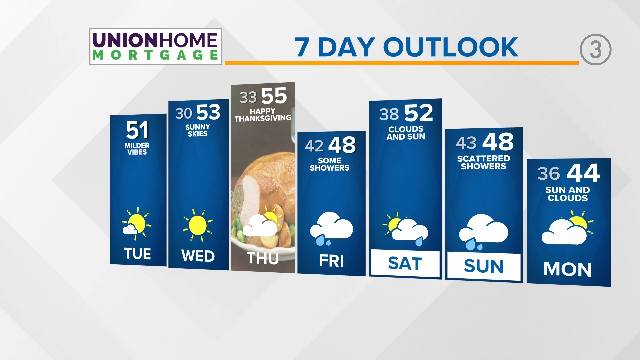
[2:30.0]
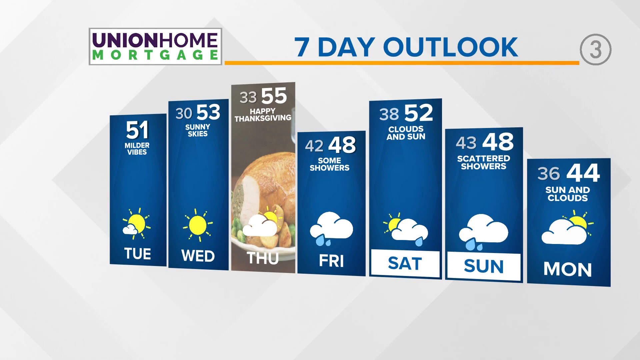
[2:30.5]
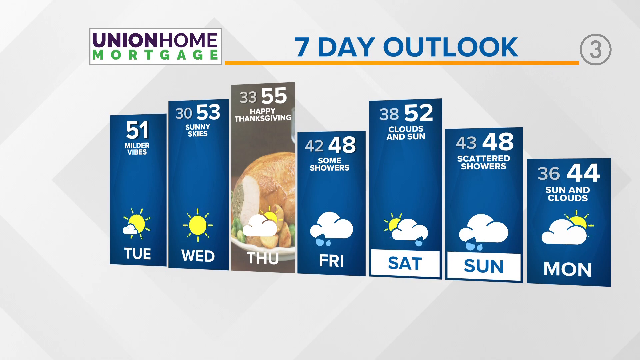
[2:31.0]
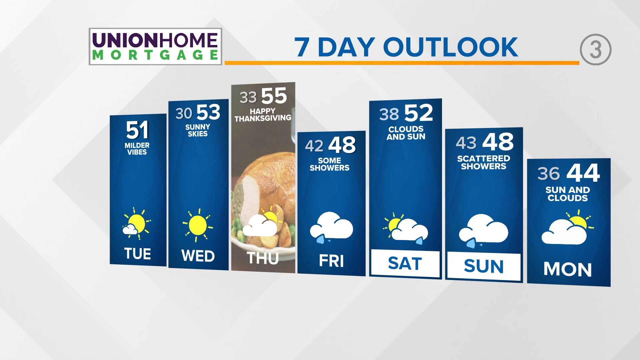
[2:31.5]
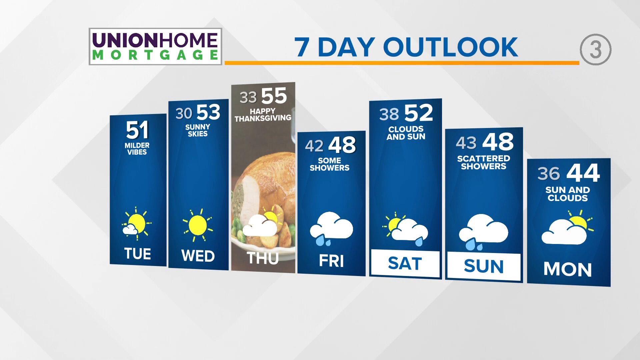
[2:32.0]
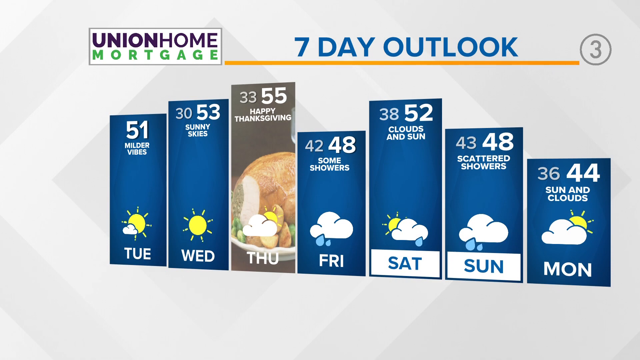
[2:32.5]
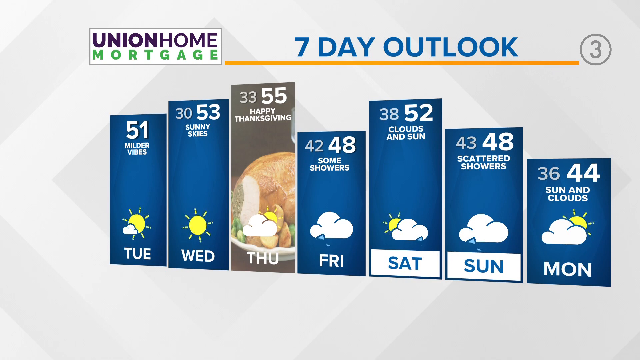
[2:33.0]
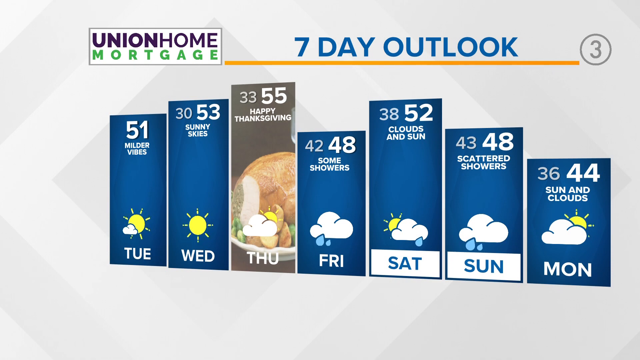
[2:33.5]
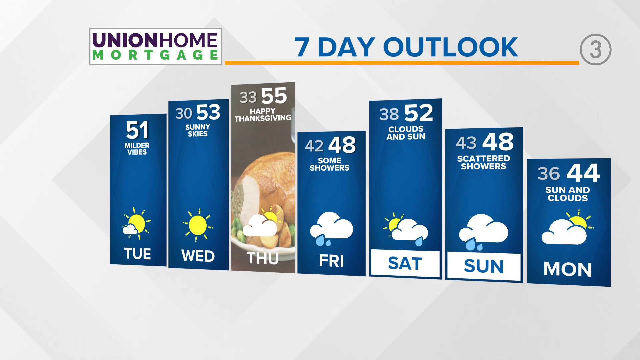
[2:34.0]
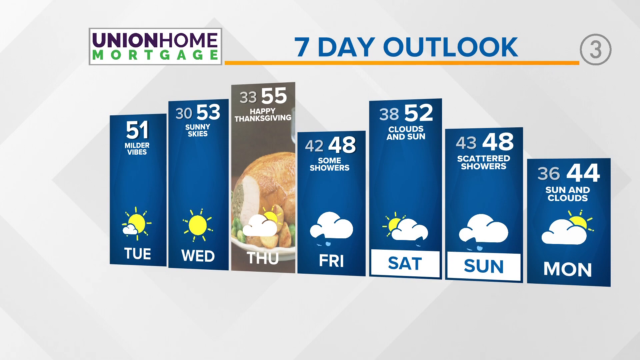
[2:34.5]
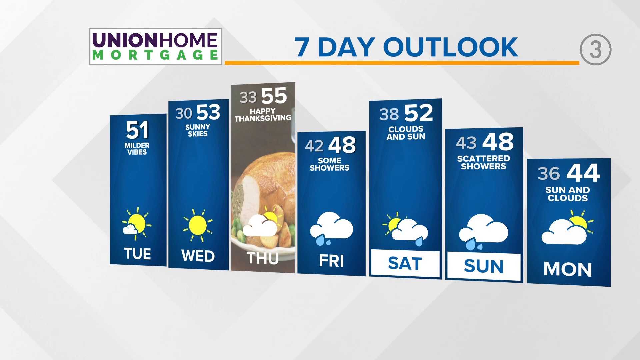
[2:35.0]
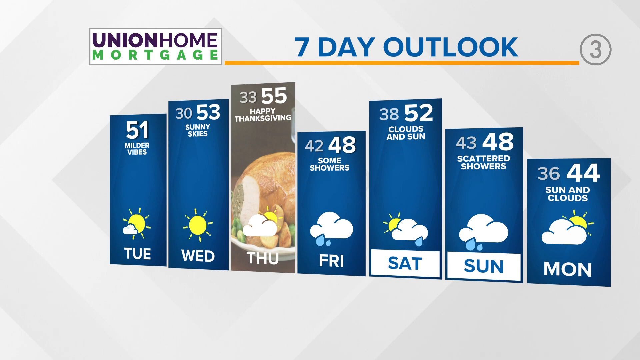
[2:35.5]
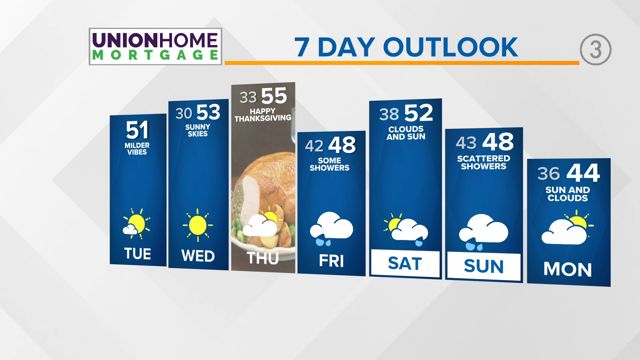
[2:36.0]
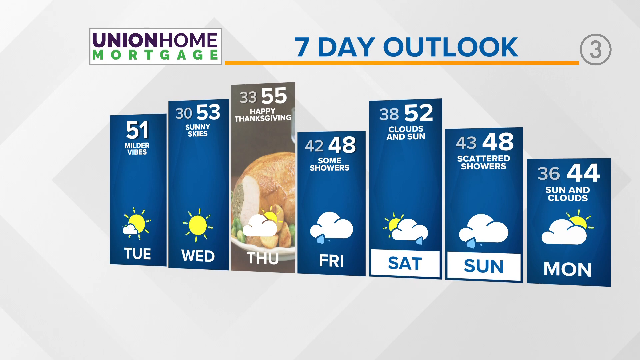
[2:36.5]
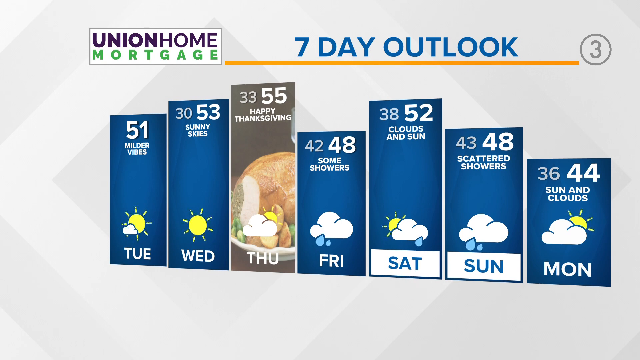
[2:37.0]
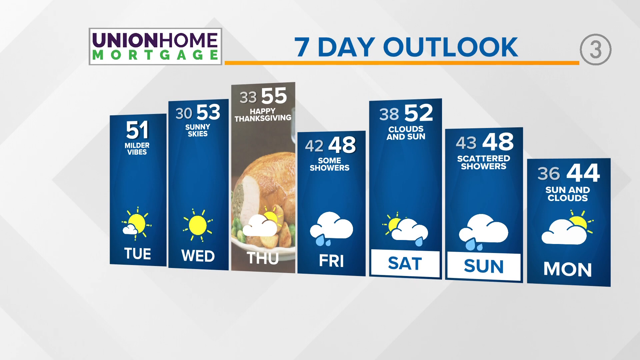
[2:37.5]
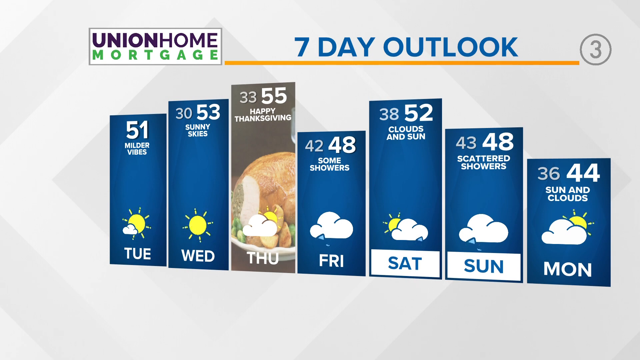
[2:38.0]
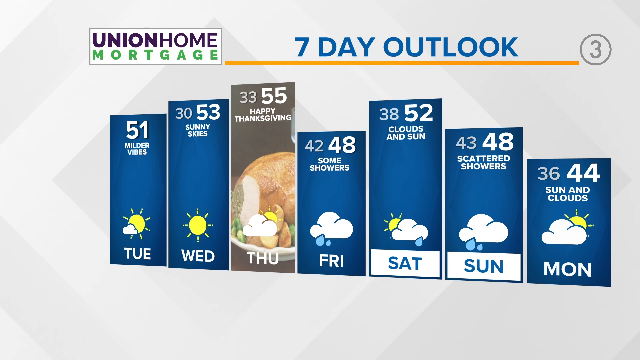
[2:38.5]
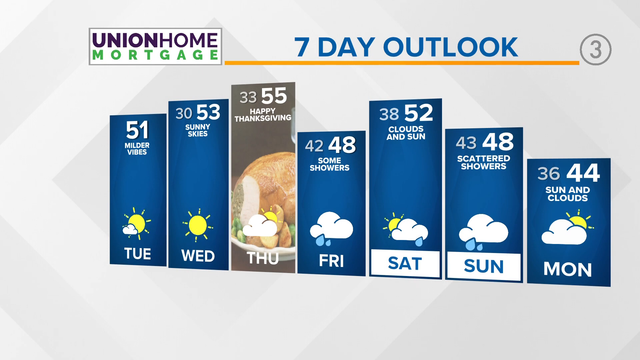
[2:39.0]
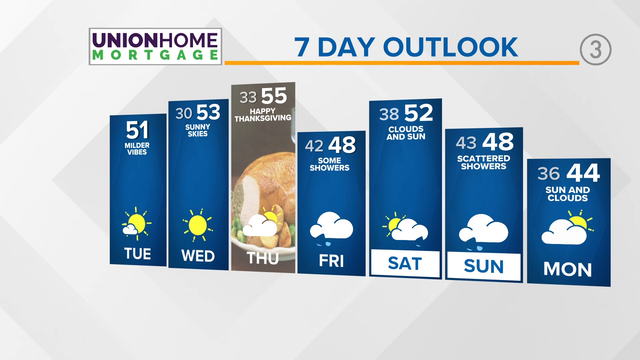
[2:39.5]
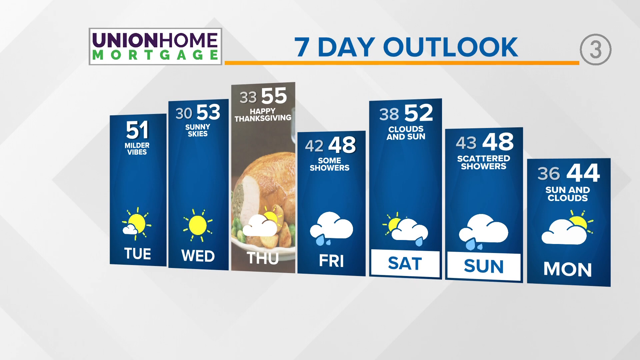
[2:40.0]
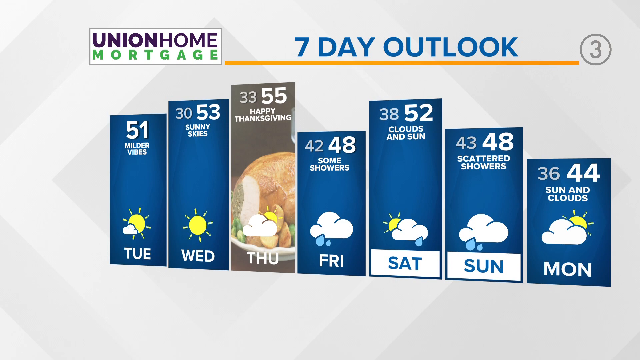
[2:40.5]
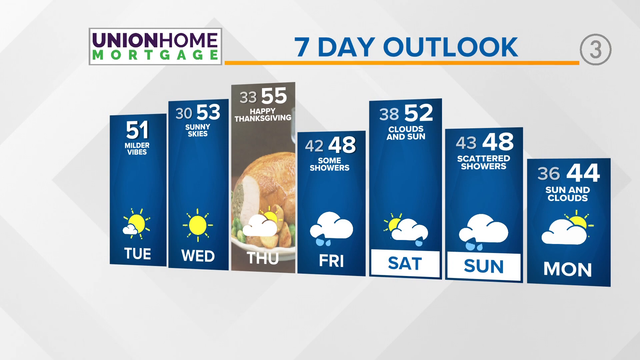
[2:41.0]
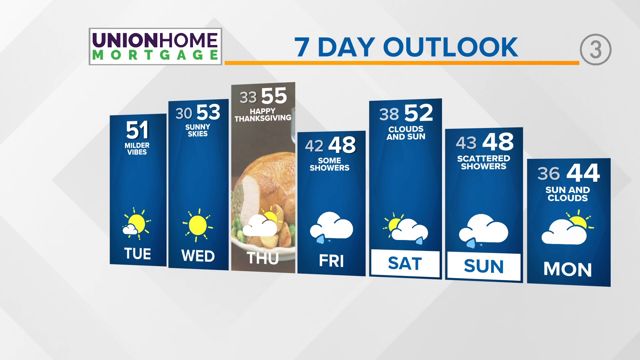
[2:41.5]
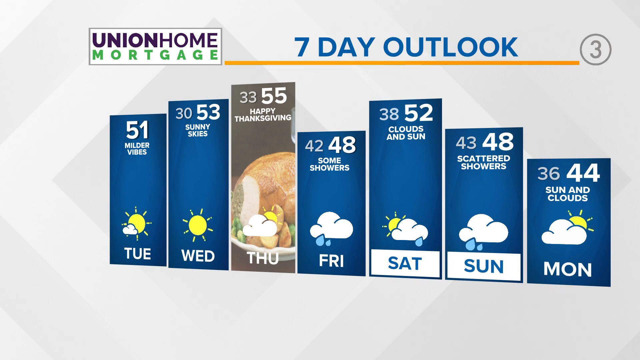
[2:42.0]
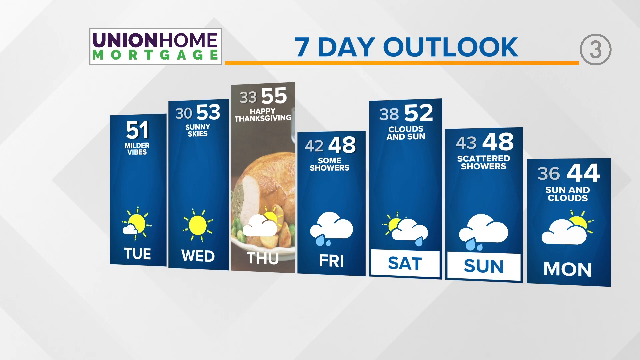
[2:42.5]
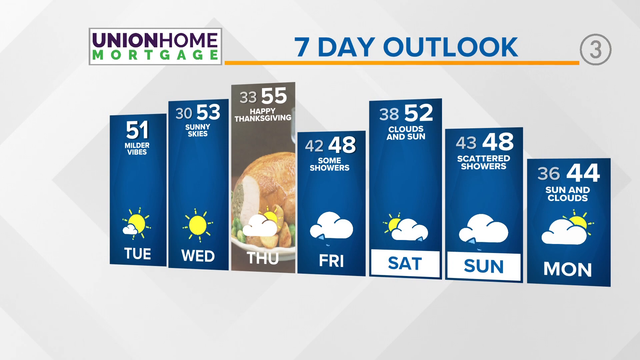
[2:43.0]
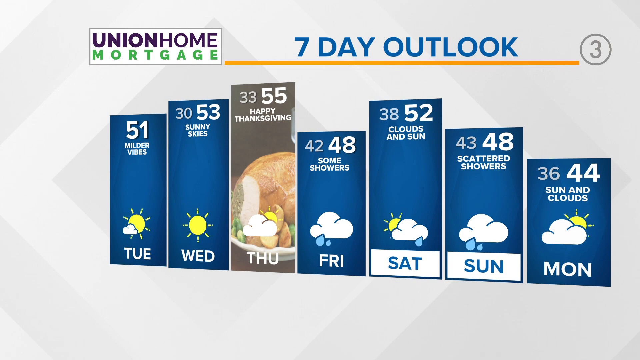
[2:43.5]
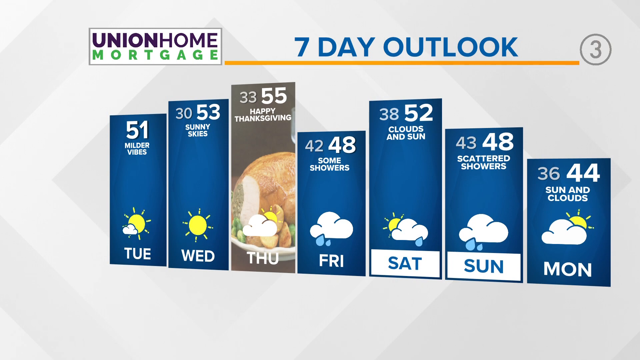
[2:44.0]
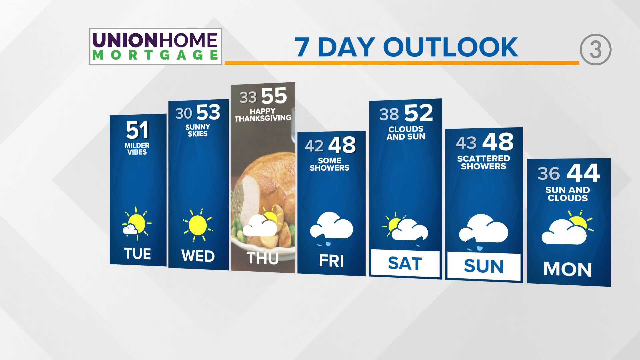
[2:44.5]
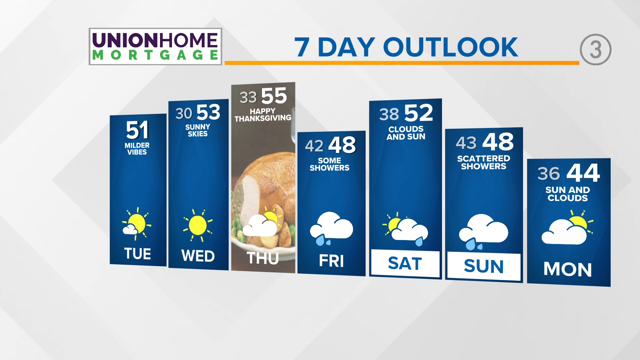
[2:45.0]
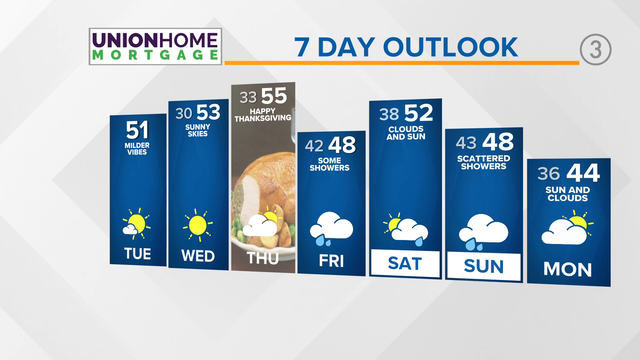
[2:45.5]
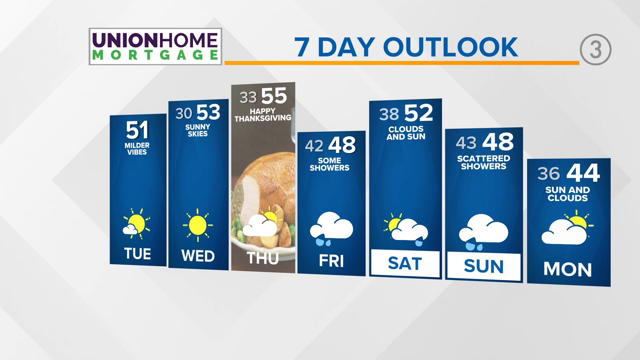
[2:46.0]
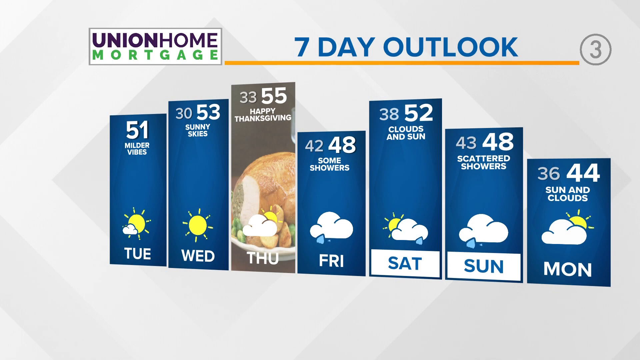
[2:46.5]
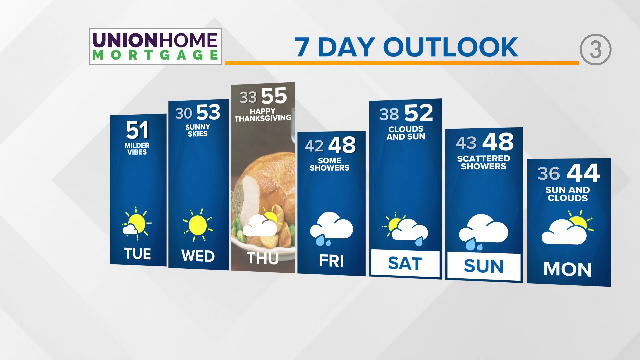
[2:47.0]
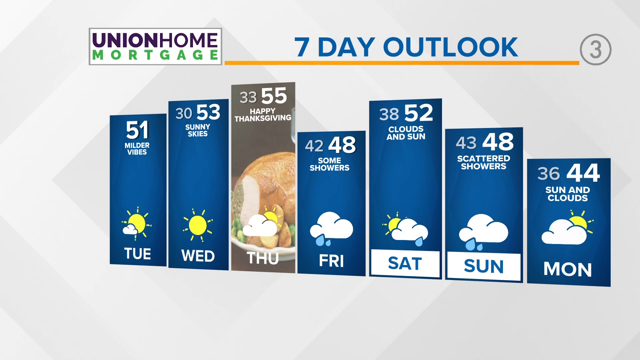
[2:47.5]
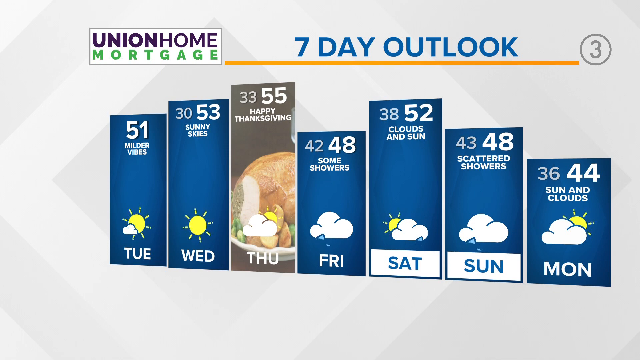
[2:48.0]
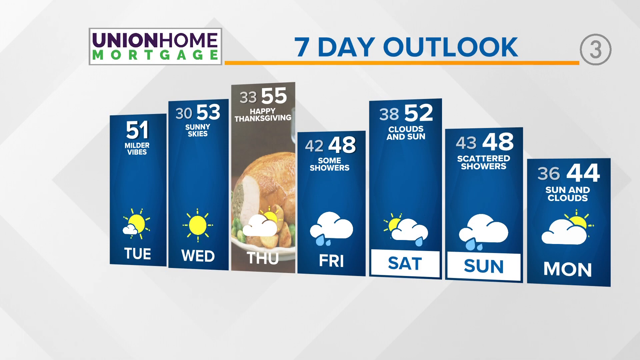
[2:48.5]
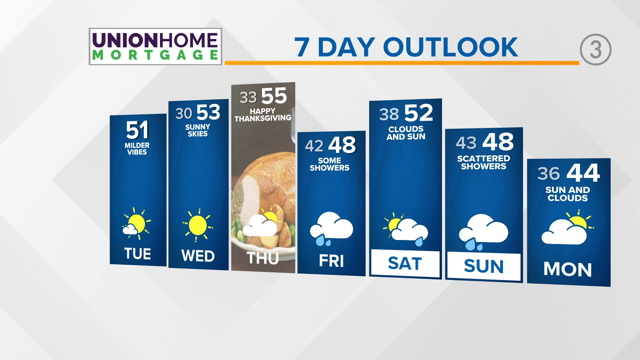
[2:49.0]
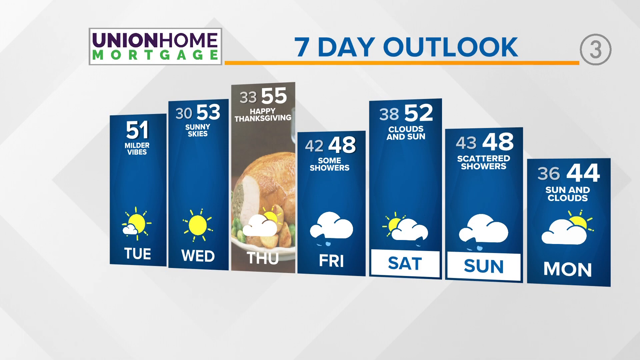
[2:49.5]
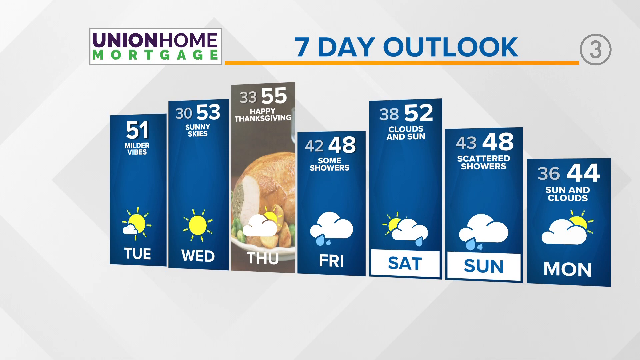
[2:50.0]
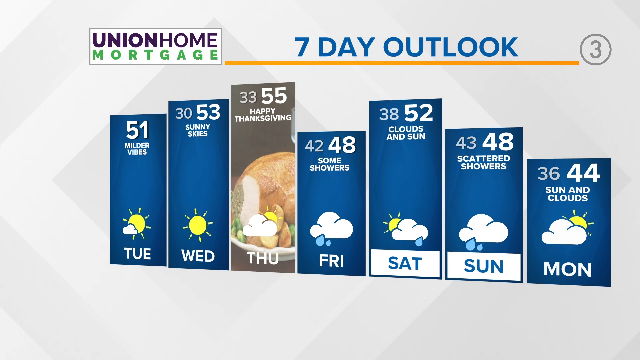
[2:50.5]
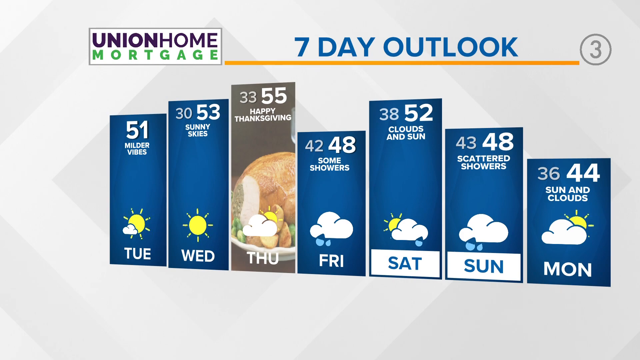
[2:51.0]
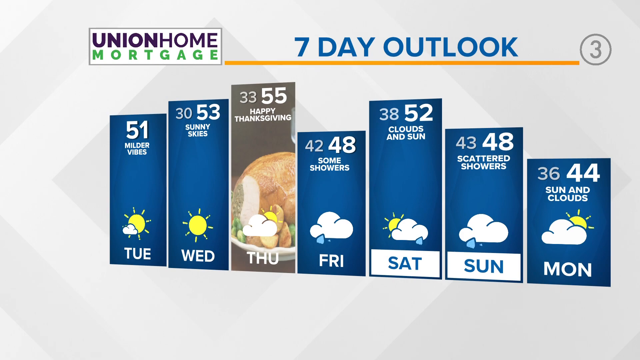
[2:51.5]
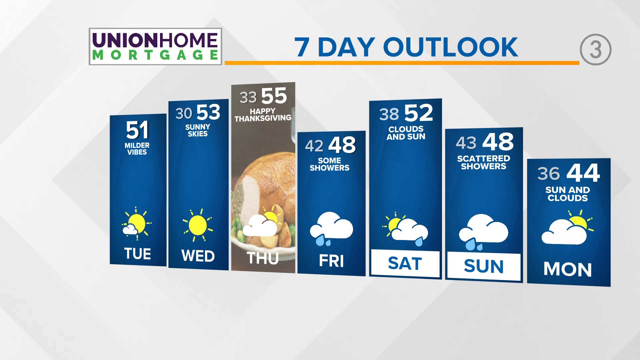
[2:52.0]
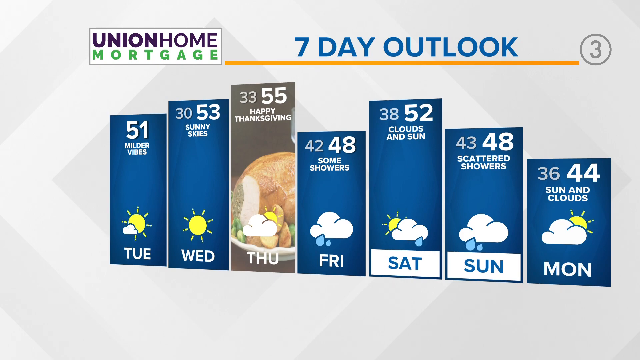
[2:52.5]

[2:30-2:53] The seven-day outlook shows a series of bars with different temperatures; the higher the temperature, the higher the bar. Inside each bar are the temperature, the day of the week and a small weather icon, usually a sun or a sun and clouds, and in some cases a cloud and a drop of rain. Thursday is the only different bar, with an image of a turkey as its background. As the video progresses, an animation shows rain drops falling from the clouds on Friday, Saturday and Sunday. In the upper left-hand corner is an advertisement for Union Home Mortgage. The heading "7 Day Outlook" is at the top, with a number 3 to its right.